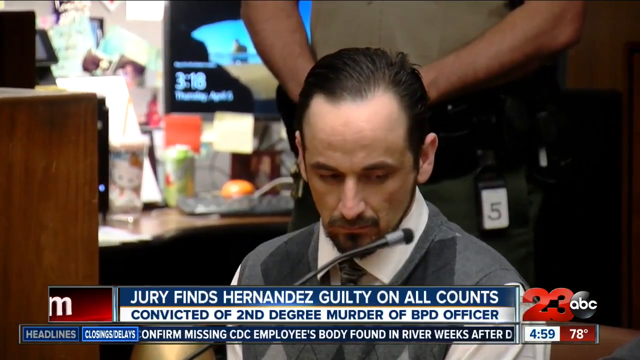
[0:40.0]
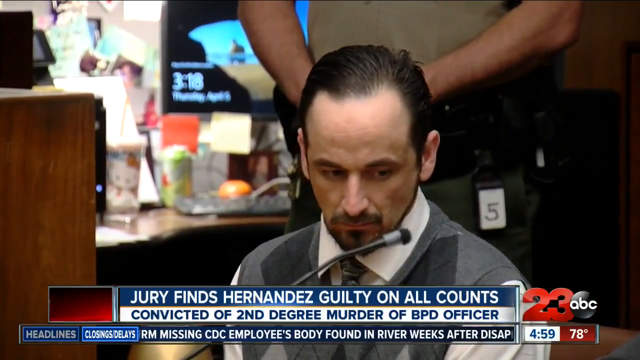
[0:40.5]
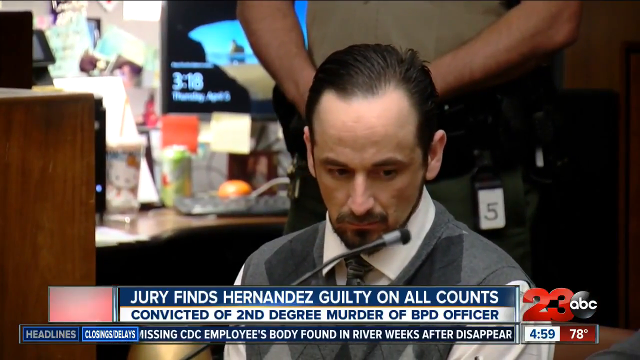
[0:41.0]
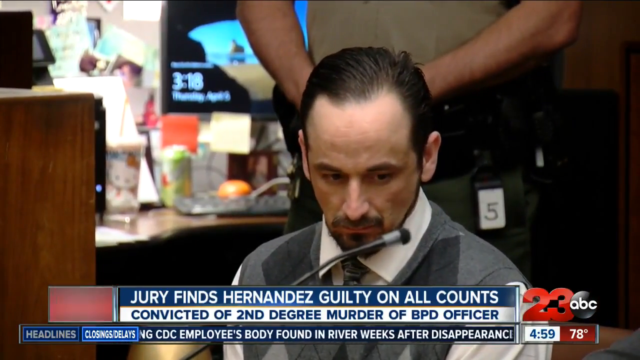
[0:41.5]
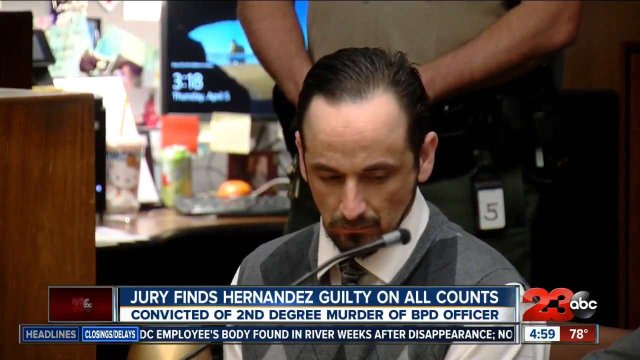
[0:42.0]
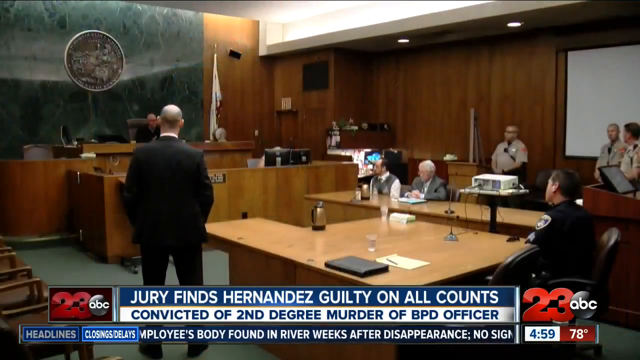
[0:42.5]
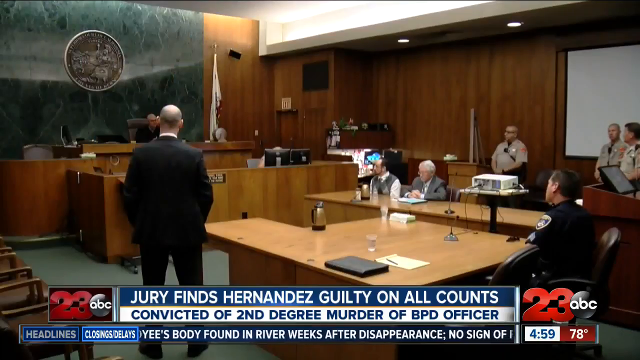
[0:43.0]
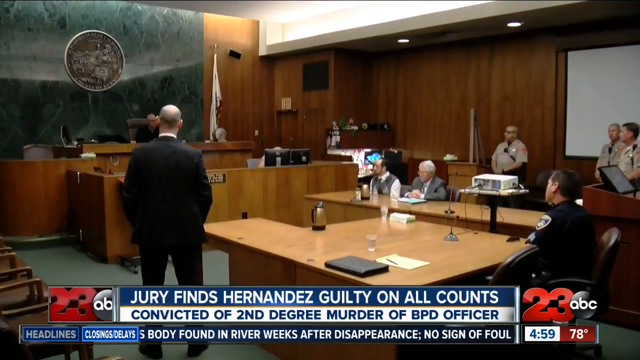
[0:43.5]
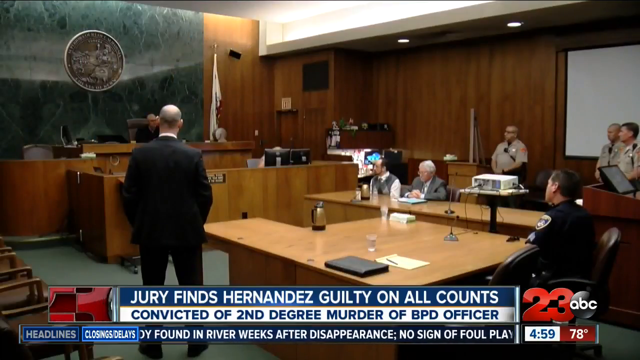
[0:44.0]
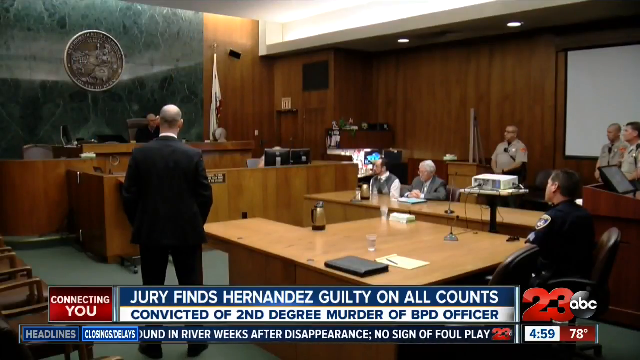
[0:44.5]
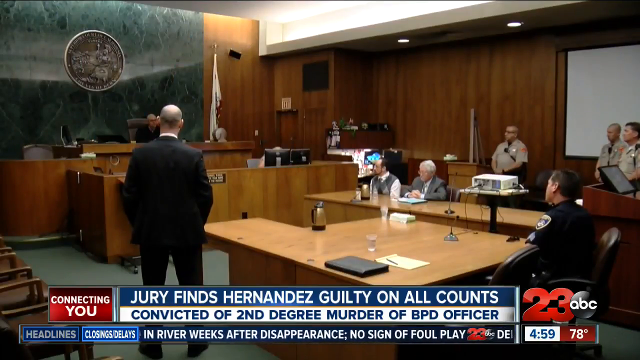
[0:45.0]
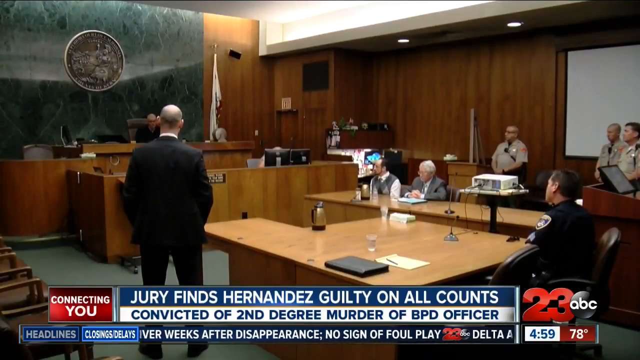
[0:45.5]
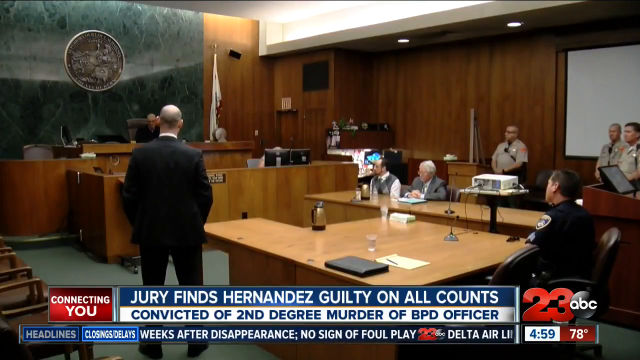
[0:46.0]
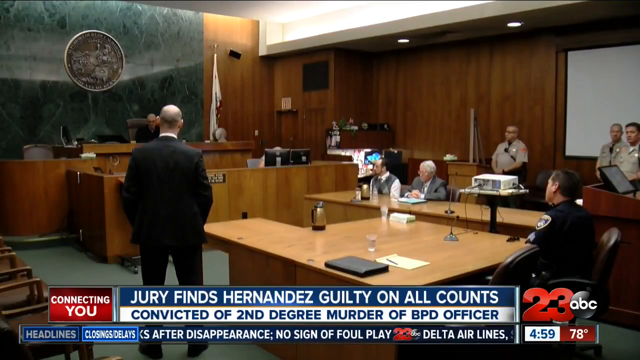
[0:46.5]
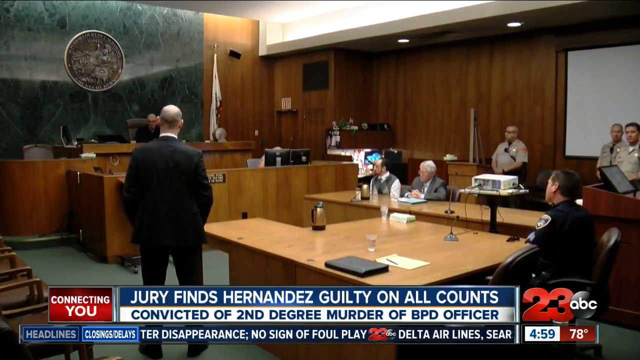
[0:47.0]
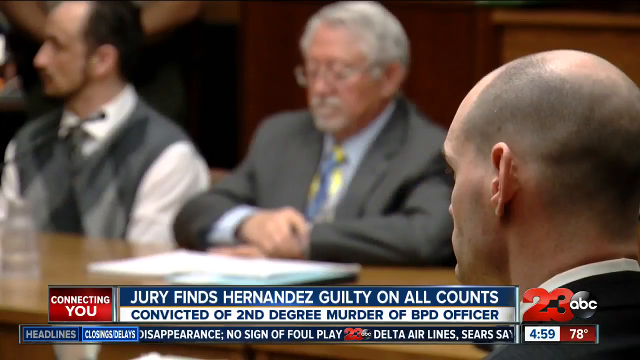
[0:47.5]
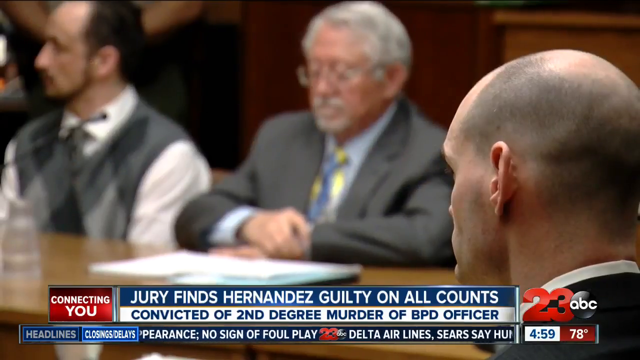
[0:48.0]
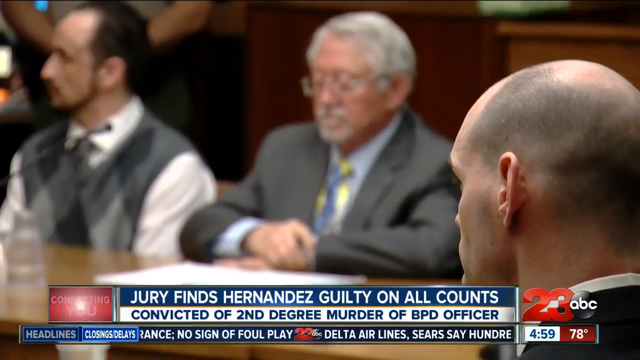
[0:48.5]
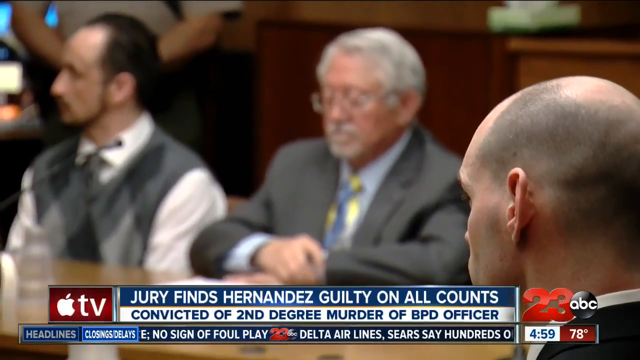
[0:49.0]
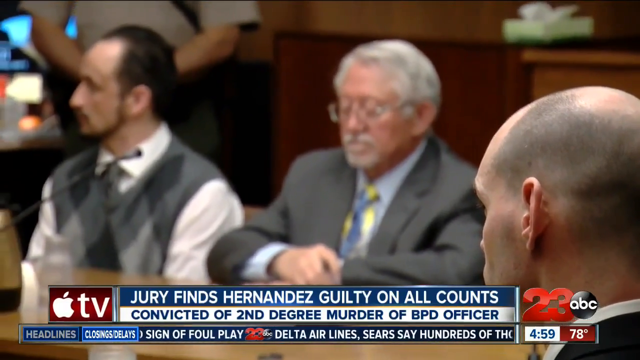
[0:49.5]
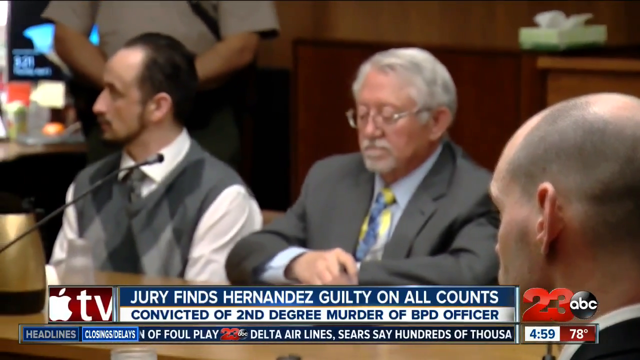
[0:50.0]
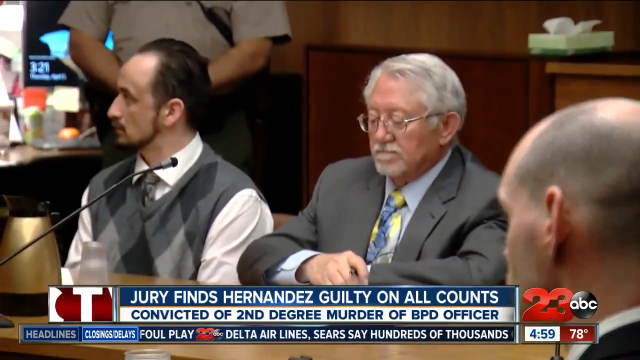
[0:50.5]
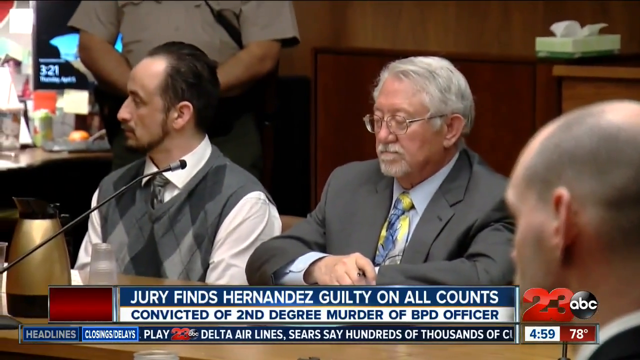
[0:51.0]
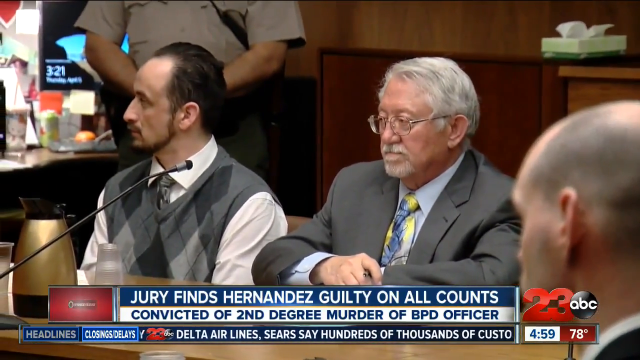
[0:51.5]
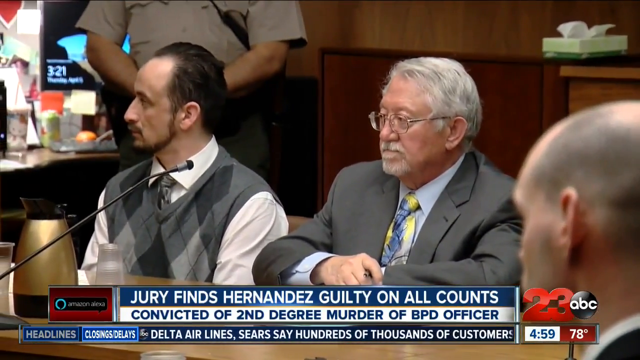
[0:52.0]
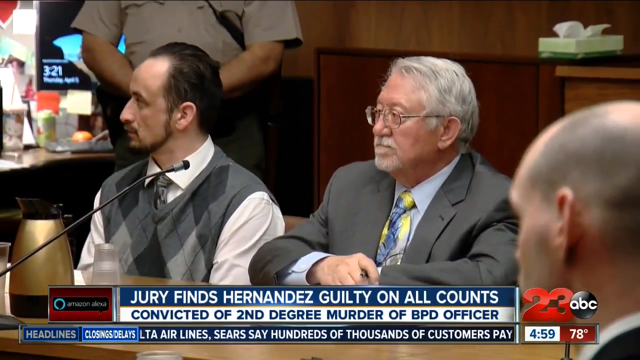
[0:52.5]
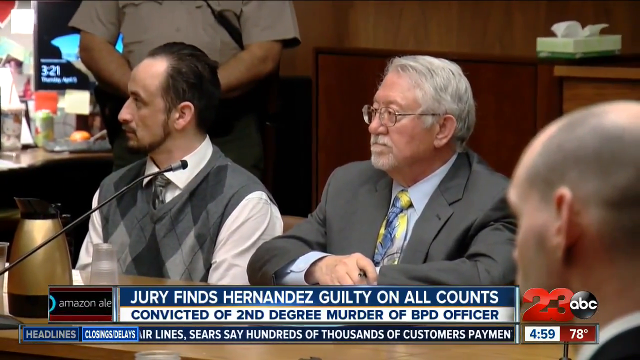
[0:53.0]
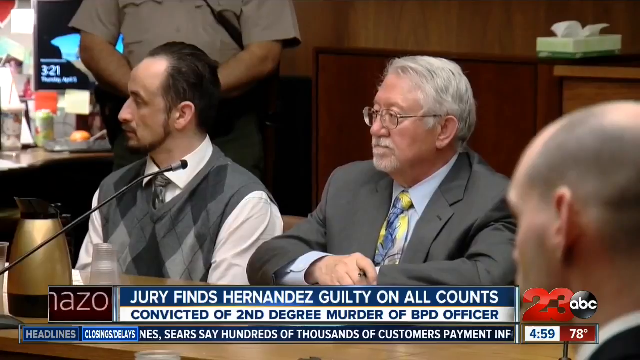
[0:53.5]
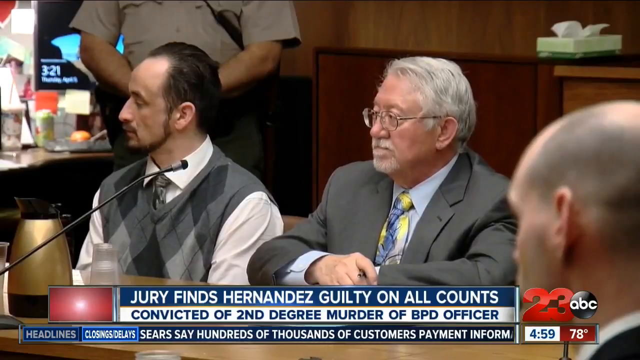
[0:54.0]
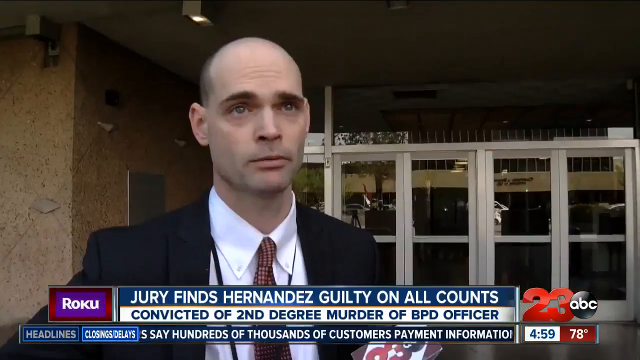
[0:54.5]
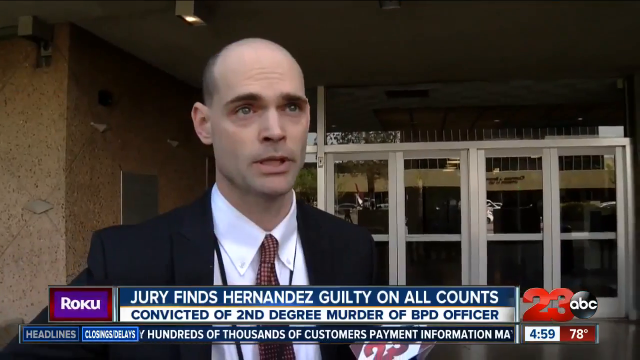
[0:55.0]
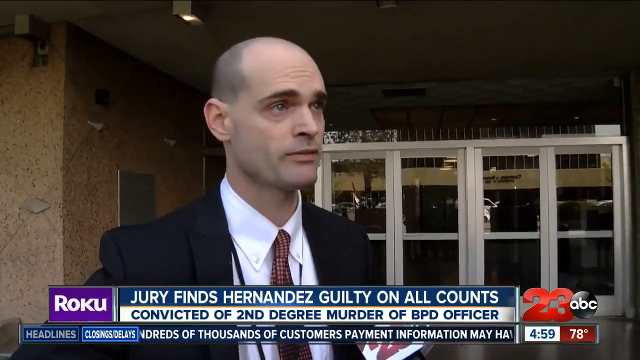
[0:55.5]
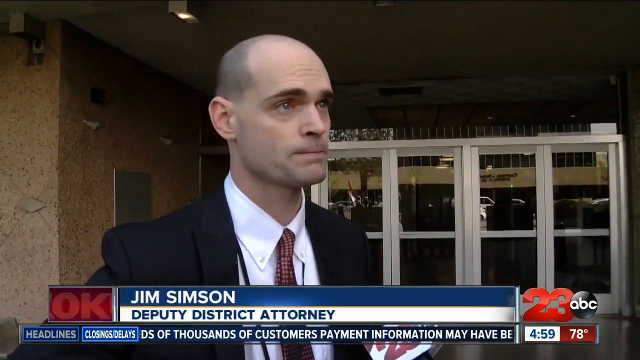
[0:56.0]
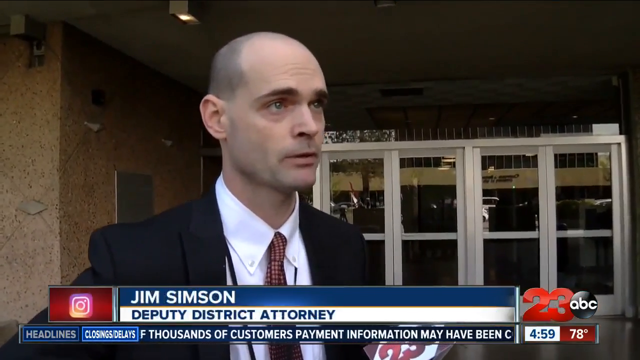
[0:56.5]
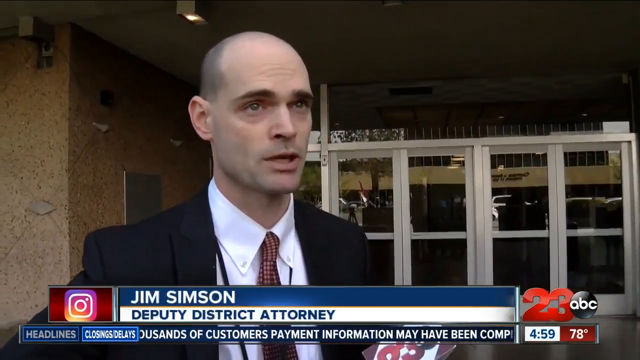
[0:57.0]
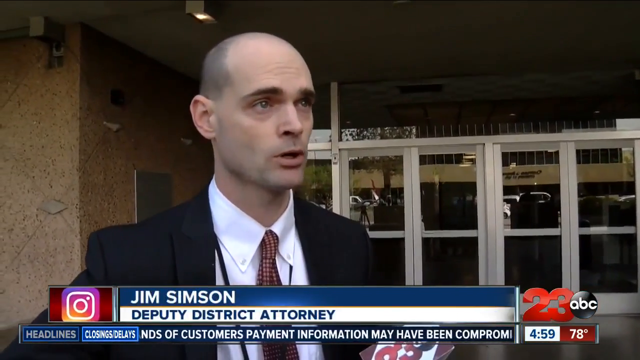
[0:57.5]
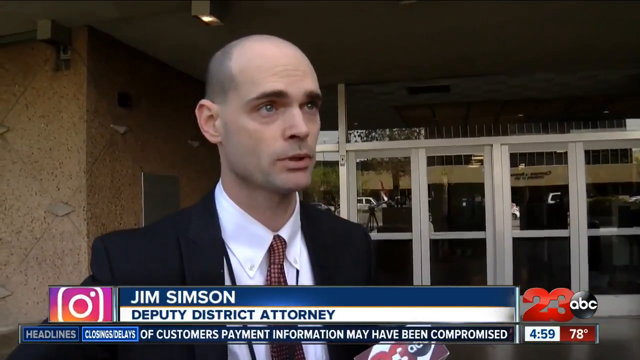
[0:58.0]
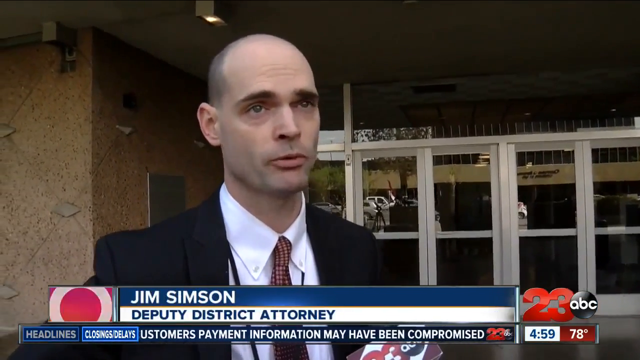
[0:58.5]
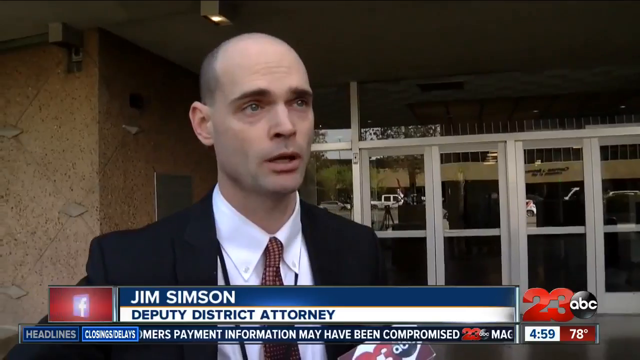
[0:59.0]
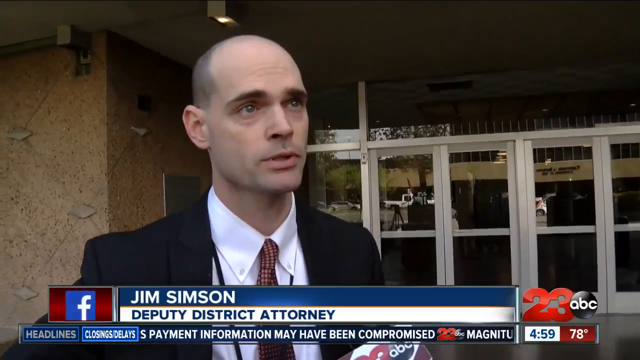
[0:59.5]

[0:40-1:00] The ABC 23 Live broadcast reports that Hernandez was found guilty on all counts and convicted of second-degree murder. He is shown at the trial, looking very nervous, with the time 3:18 on Thursday, April 5th visible; the year is not shown. Deputy district attorney Jim Simpson is then interviewed, and another scene shows him at the trial. Behind Hernandez, a 7 Up and an orange are on a desk, and there is apparently a Hello Kitty item behind him as well.